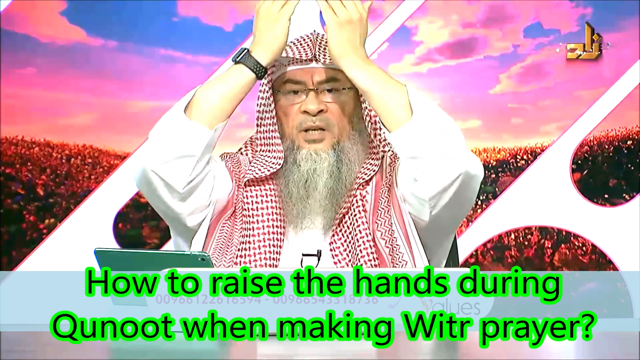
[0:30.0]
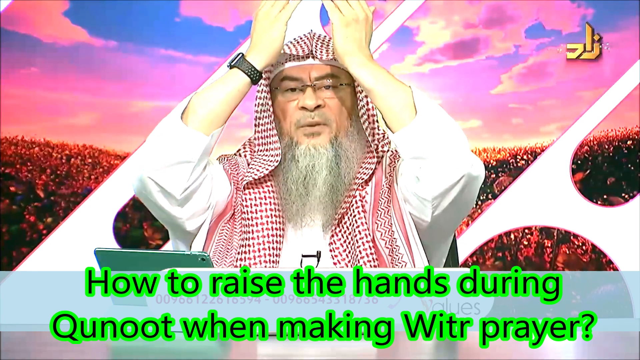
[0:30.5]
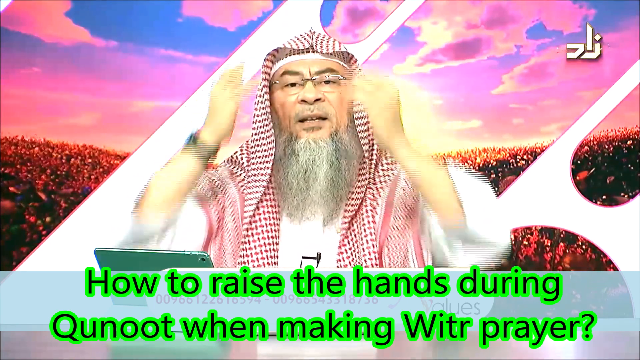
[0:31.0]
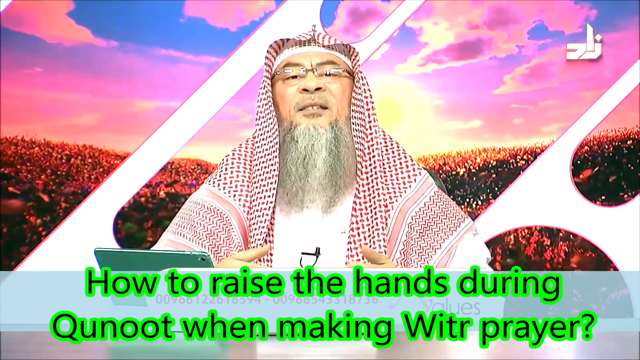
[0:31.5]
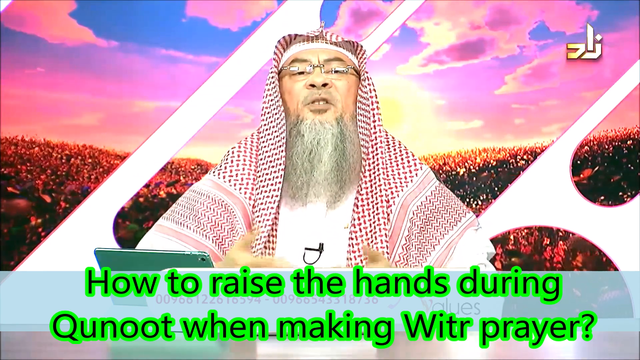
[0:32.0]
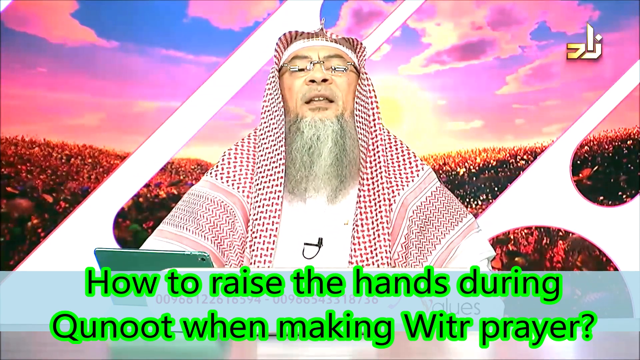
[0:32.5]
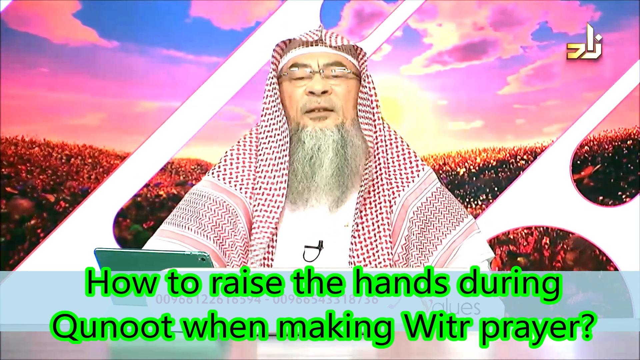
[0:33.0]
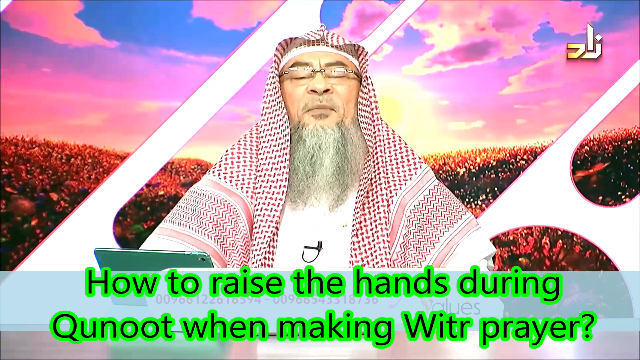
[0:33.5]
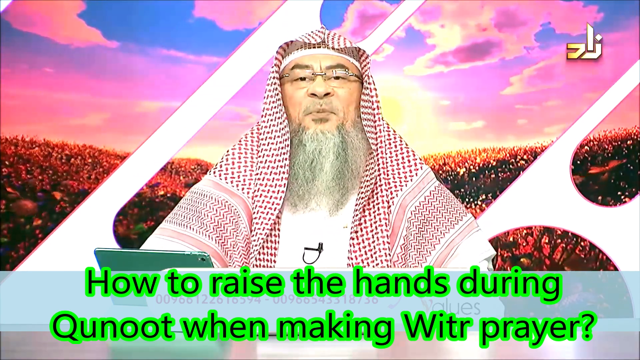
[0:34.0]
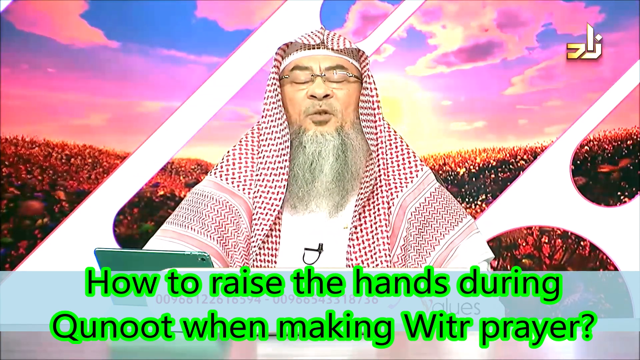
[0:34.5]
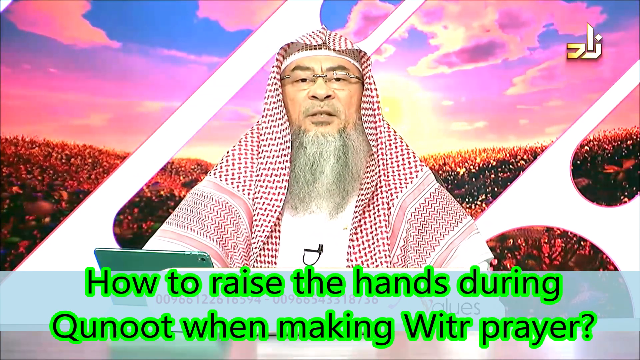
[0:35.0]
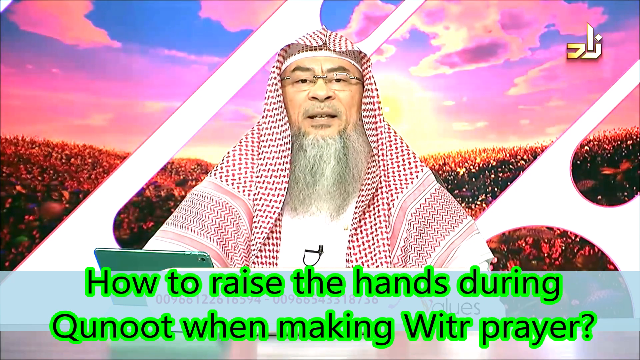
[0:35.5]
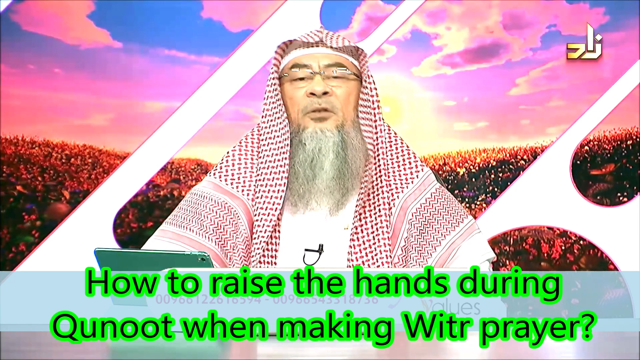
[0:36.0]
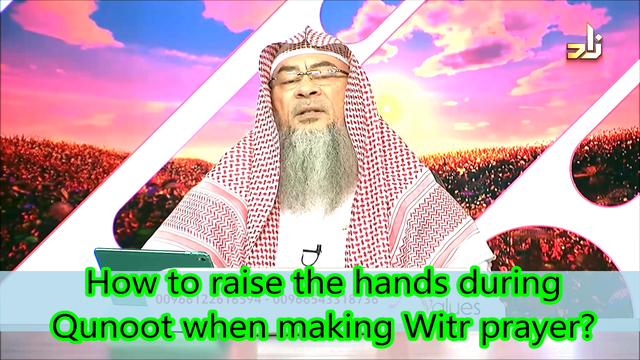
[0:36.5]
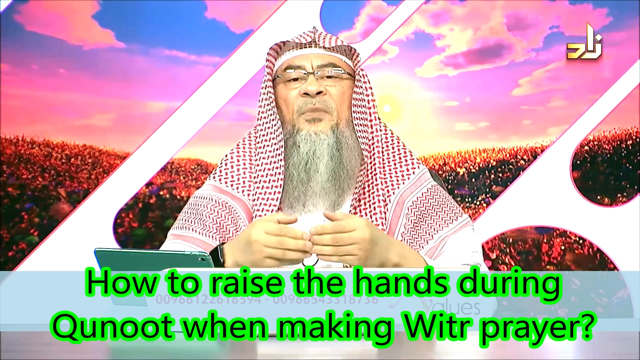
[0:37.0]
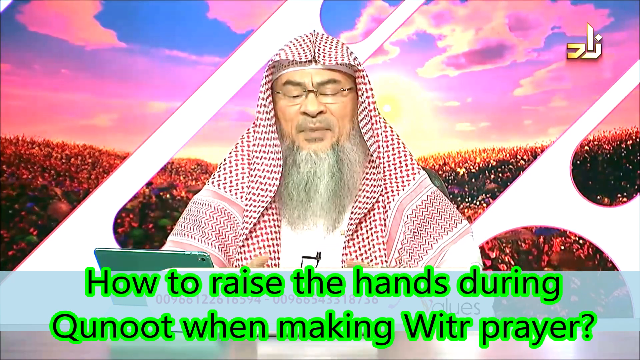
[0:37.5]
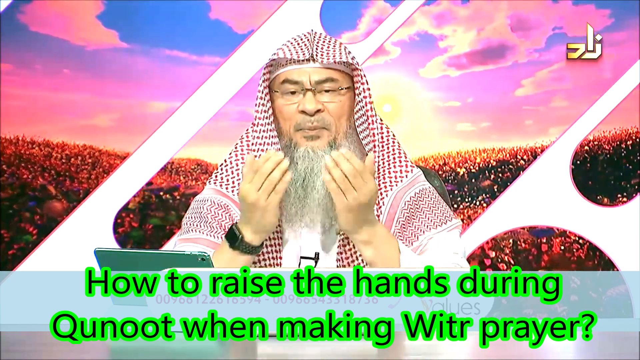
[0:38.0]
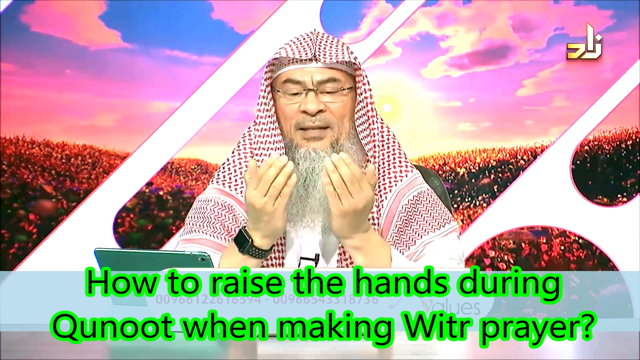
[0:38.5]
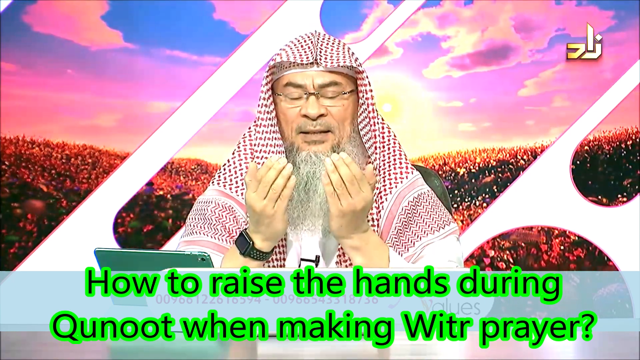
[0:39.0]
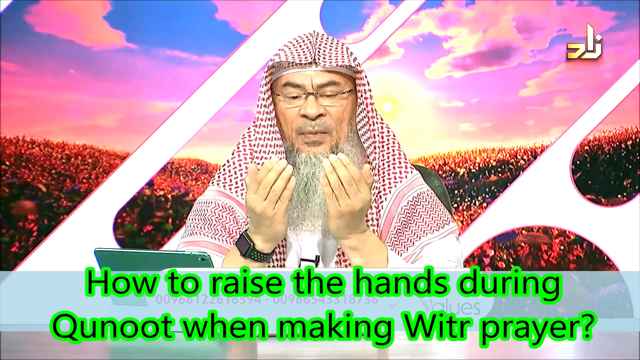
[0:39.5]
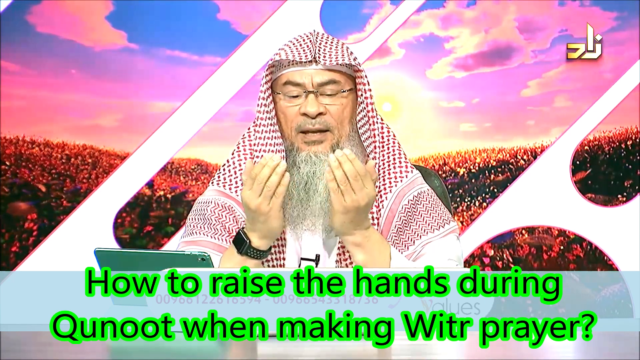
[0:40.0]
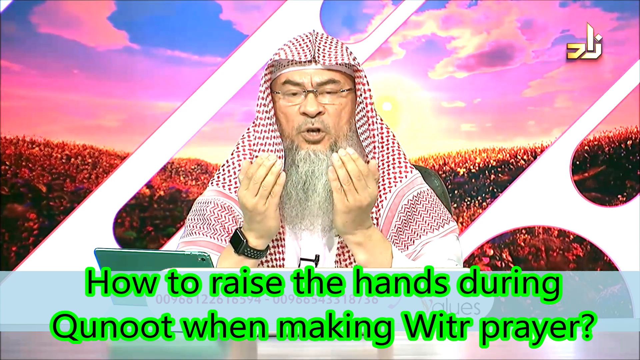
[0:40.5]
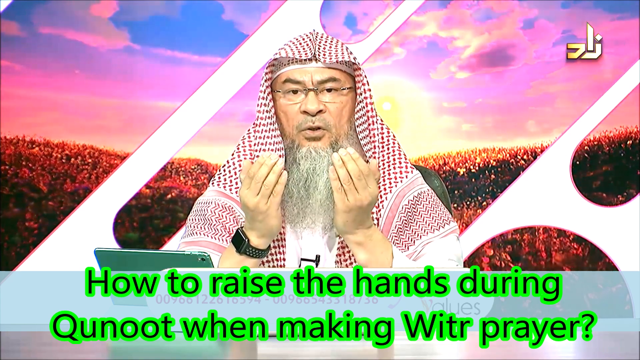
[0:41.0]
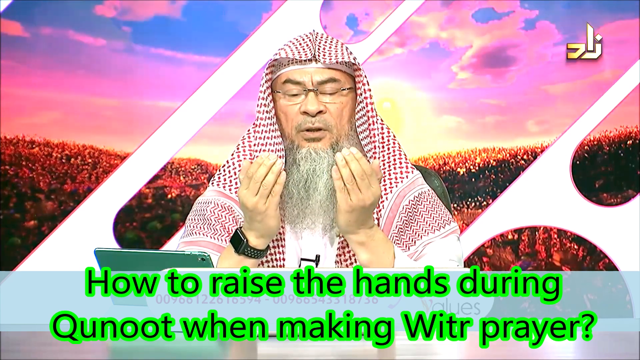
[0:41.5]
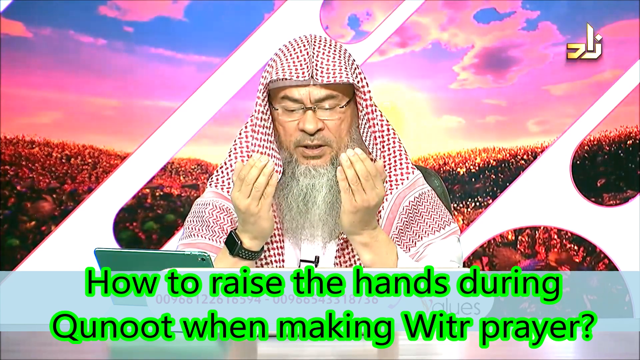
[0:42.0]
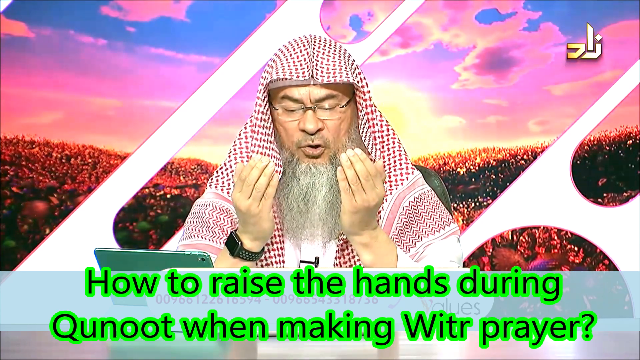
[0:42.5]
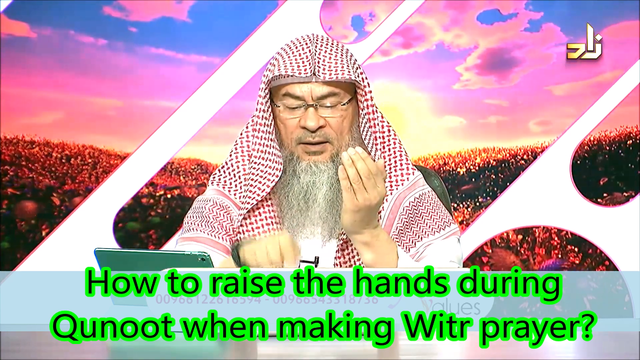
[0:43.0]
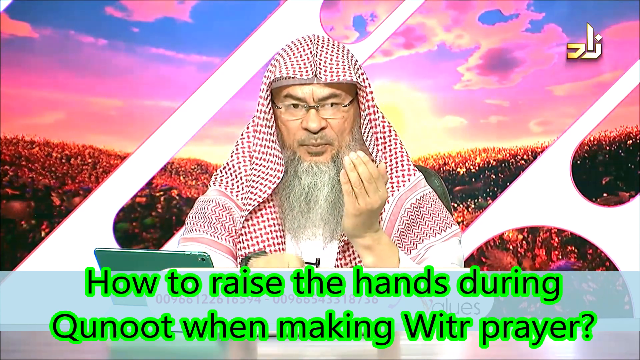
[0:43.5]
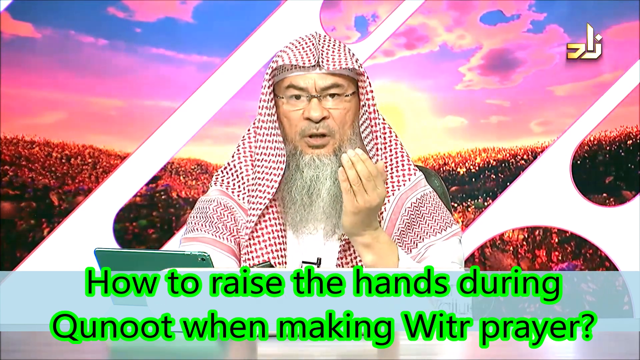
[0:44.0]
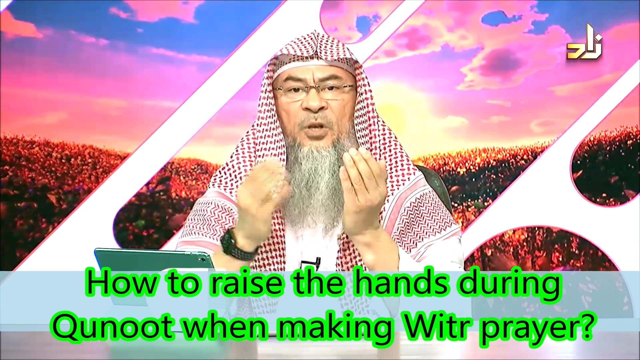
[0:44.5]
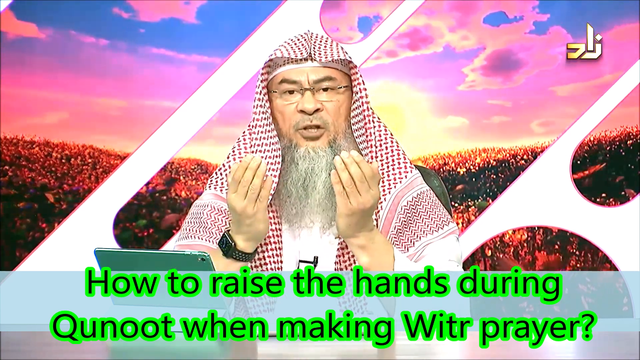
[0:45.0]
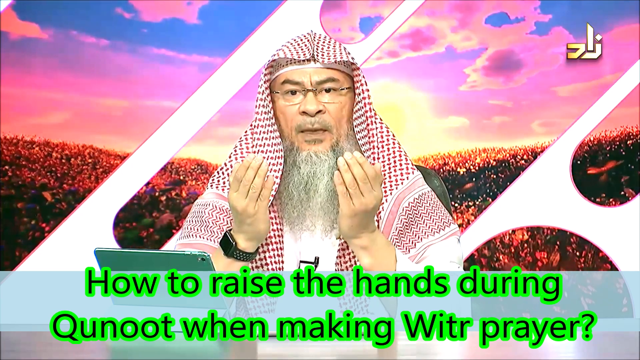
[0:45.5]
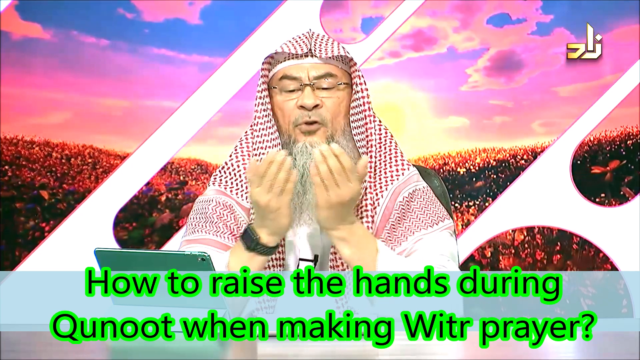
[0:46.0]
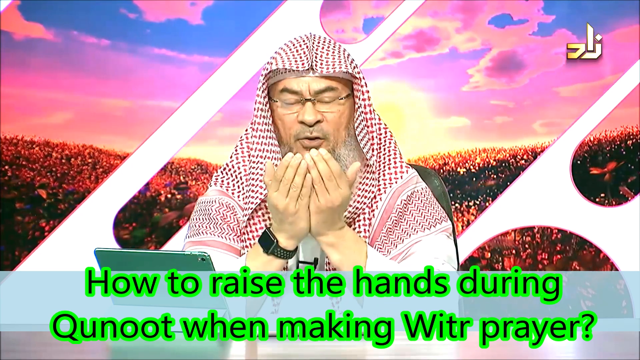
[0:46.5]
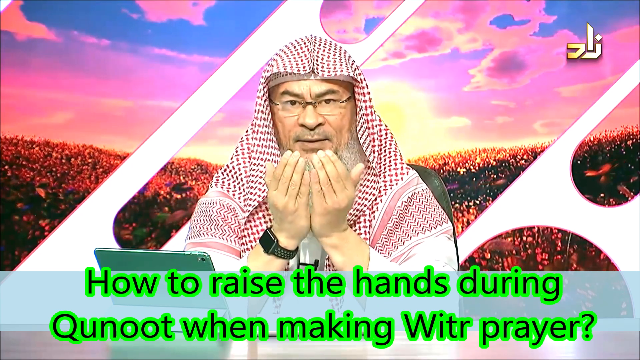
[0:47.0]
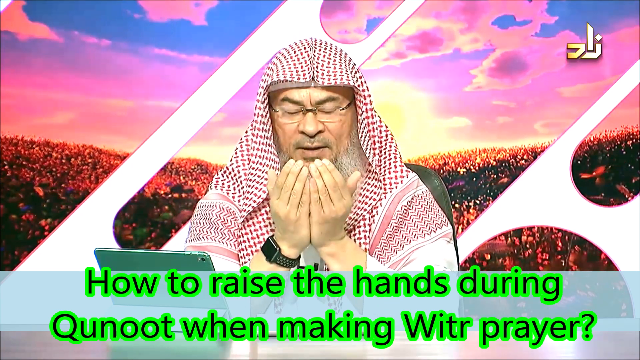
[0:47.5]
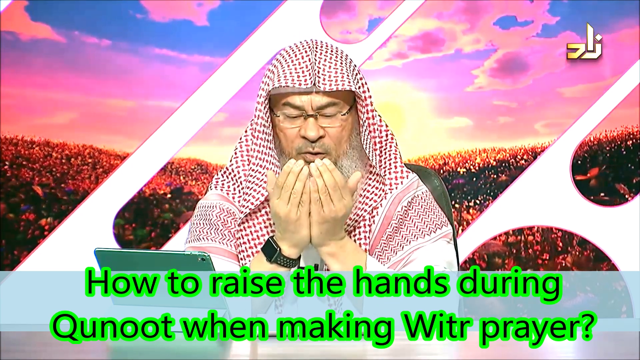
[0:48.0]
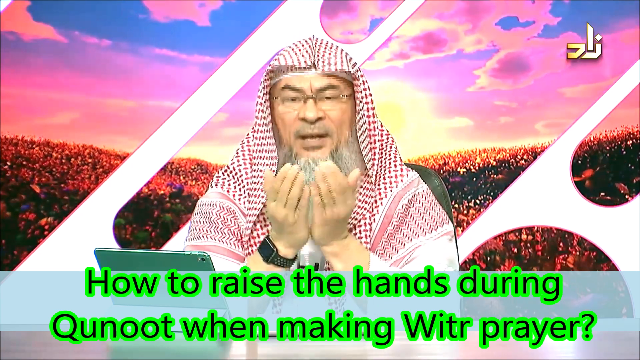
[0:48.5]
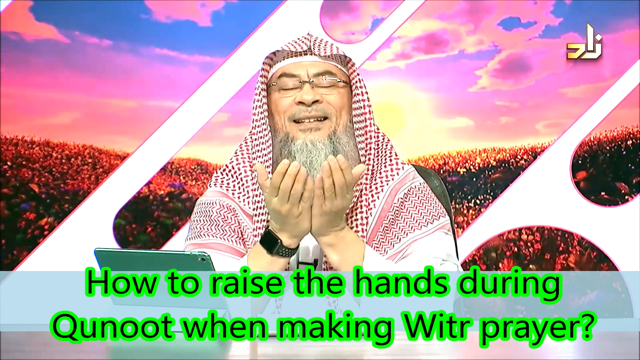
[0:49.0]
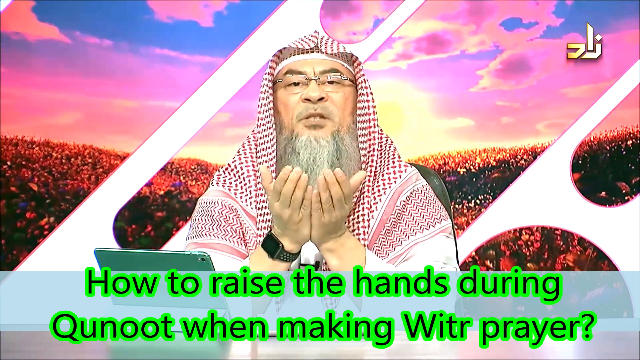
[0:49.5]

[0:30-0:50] The sheikh seems to be answering the question on the screen, how to raise the hands during qunoot when making witr prayer, and seems to be demonstrating the answer. He puts his hands together in front of his face, as if cupping something, and speaks to the audience, seemingly giving instructions as he talks, and then he brings his hands above his head. An Apple Watch is on his wrist, he has a red decorative scarf around his head, an iPad is in front of him, and a microphone is attached to his clothes. Behind him, a screen shows what appears to be a field of flowers during sunset or sunrise.